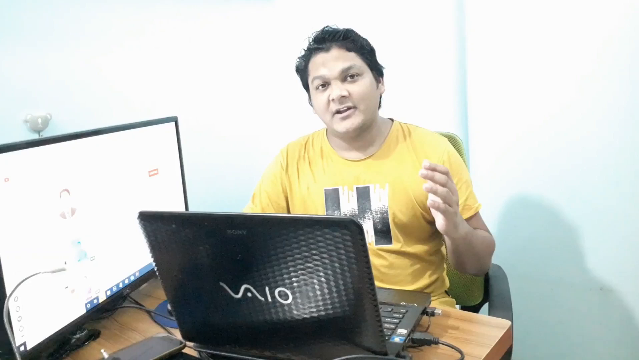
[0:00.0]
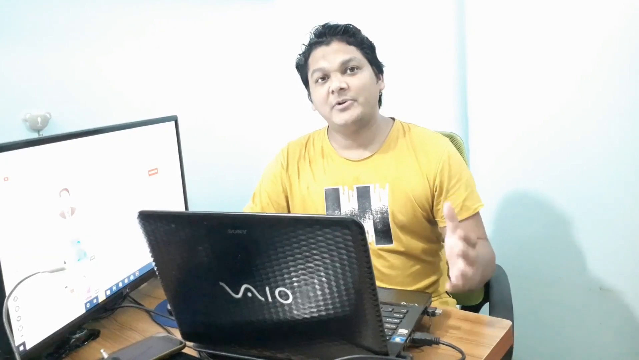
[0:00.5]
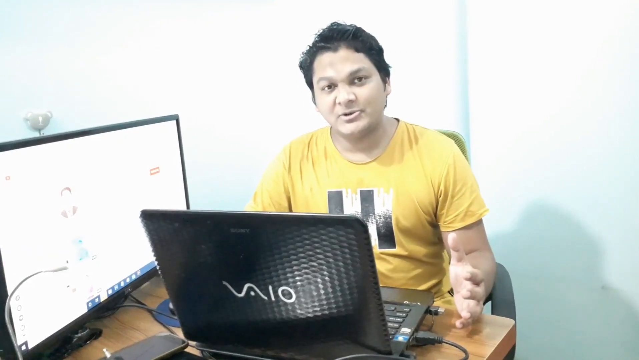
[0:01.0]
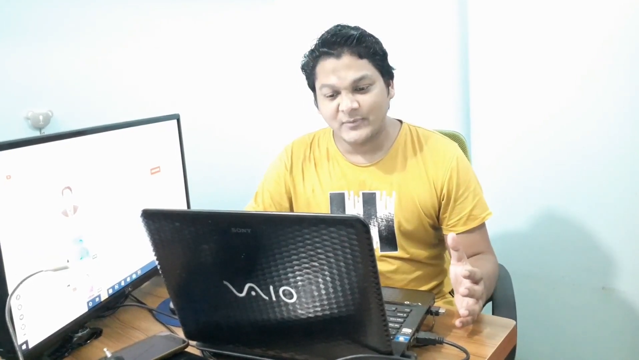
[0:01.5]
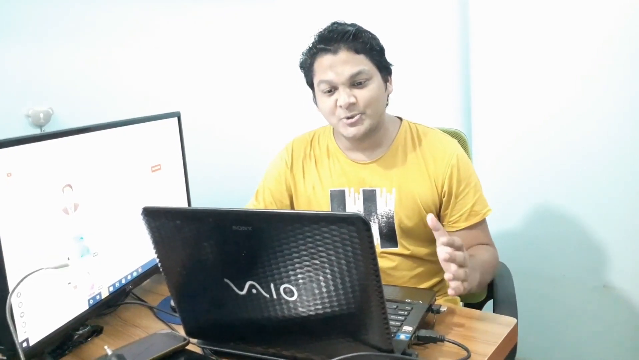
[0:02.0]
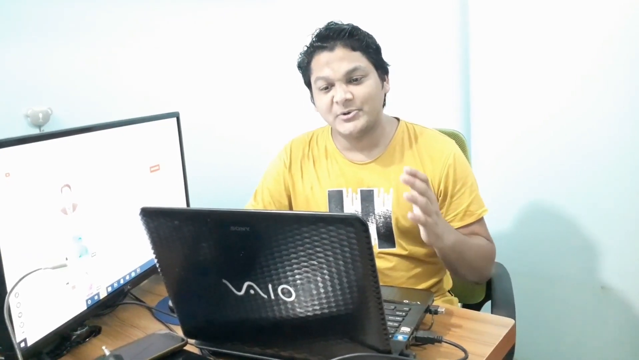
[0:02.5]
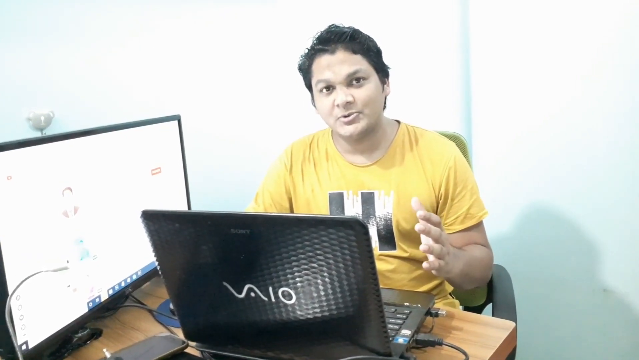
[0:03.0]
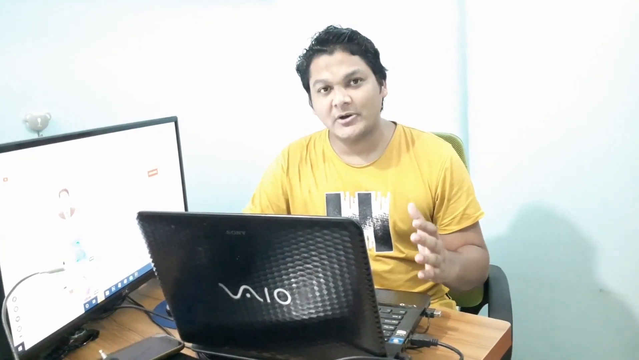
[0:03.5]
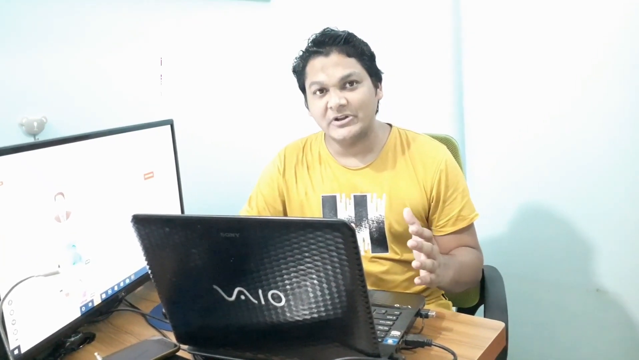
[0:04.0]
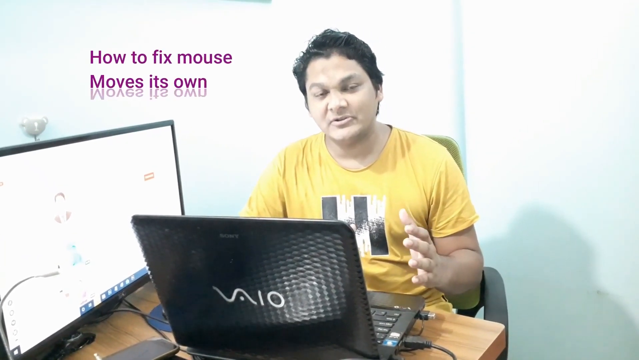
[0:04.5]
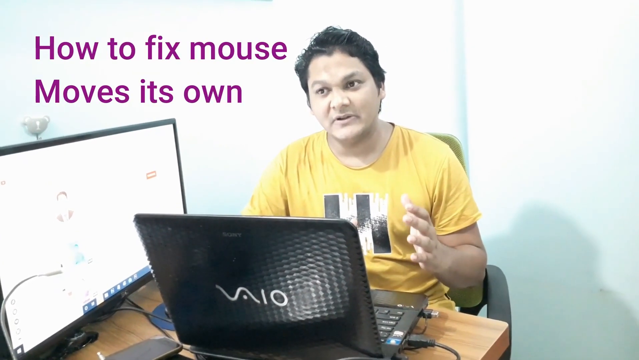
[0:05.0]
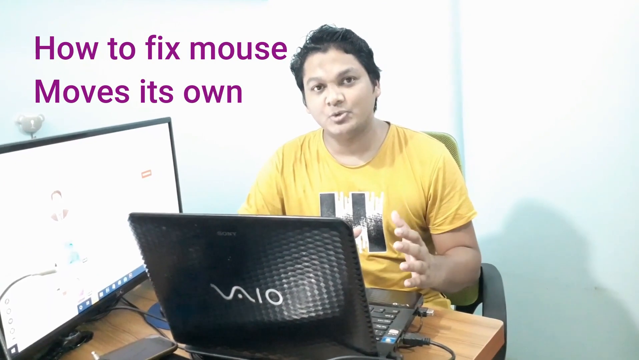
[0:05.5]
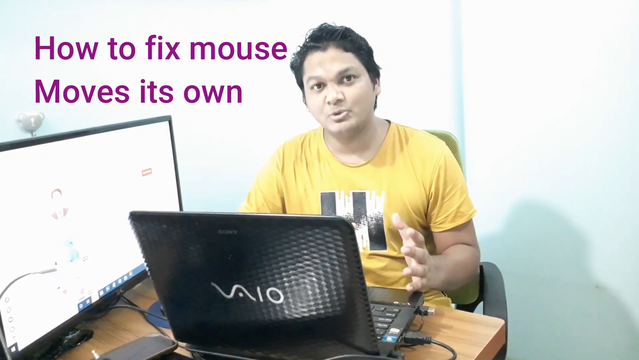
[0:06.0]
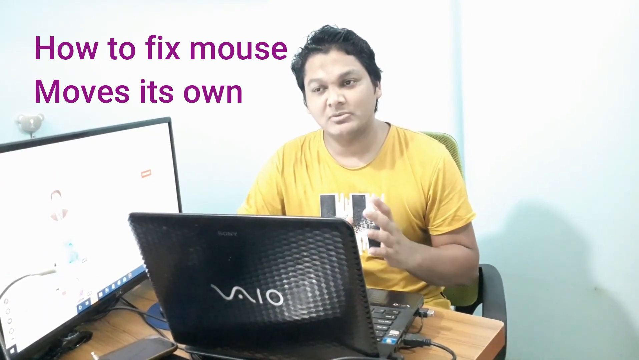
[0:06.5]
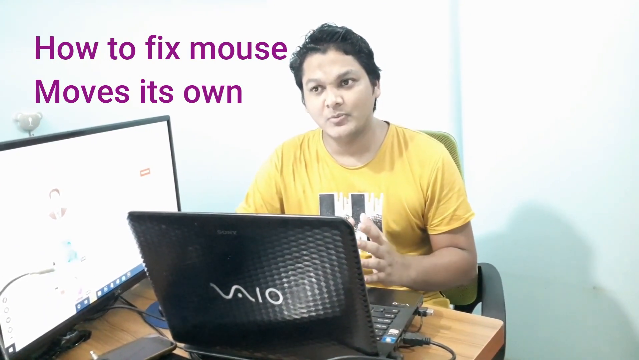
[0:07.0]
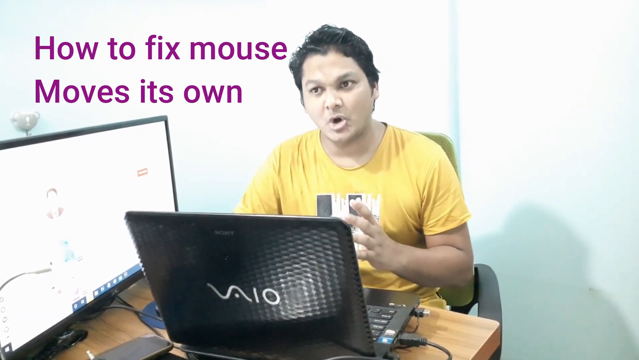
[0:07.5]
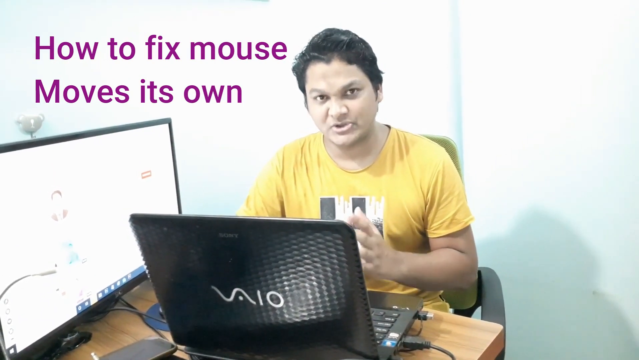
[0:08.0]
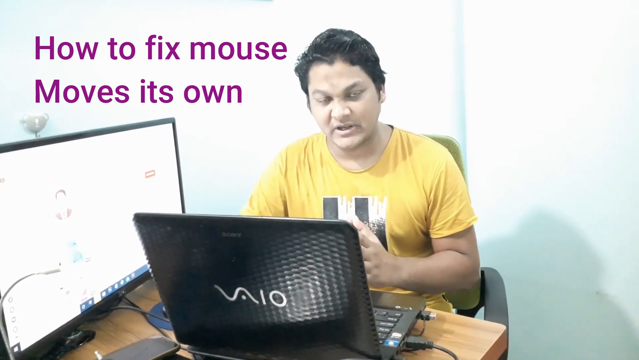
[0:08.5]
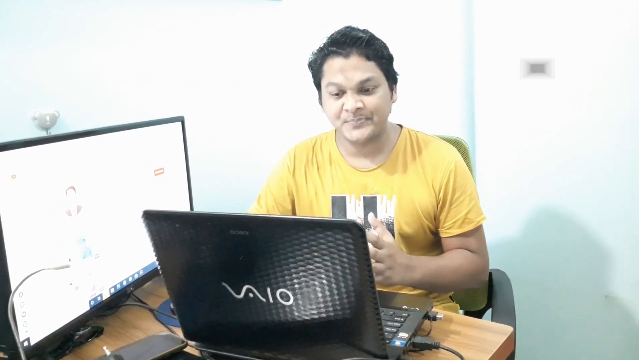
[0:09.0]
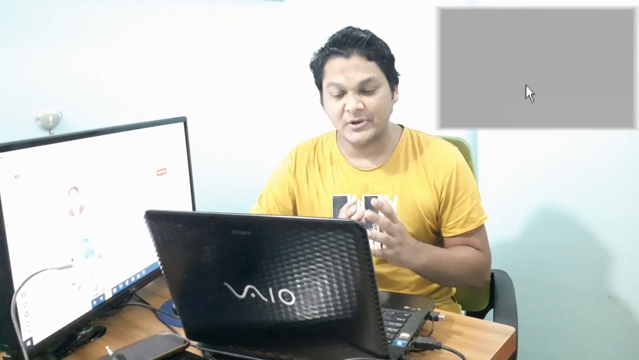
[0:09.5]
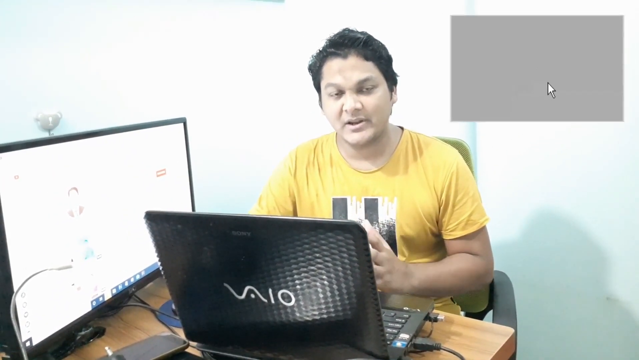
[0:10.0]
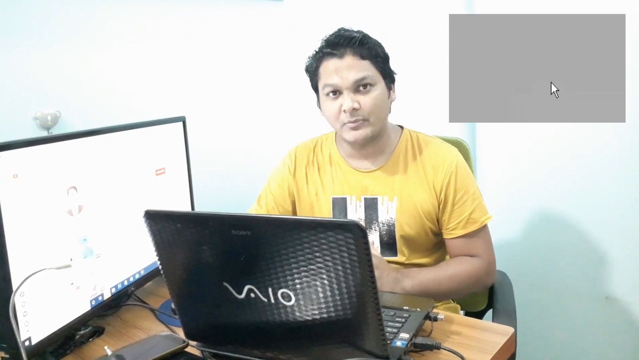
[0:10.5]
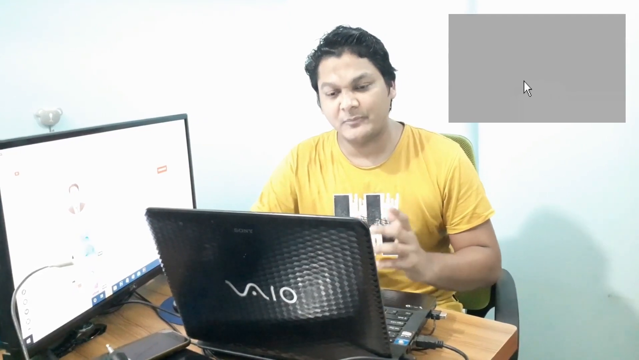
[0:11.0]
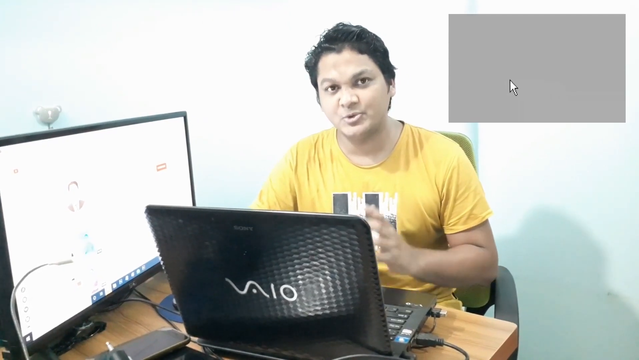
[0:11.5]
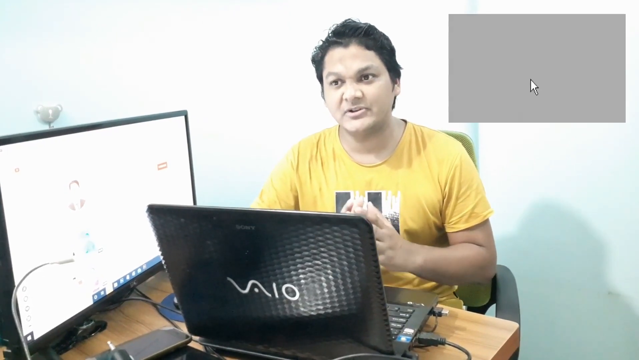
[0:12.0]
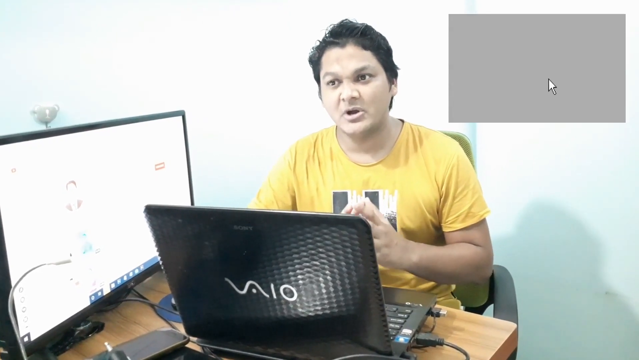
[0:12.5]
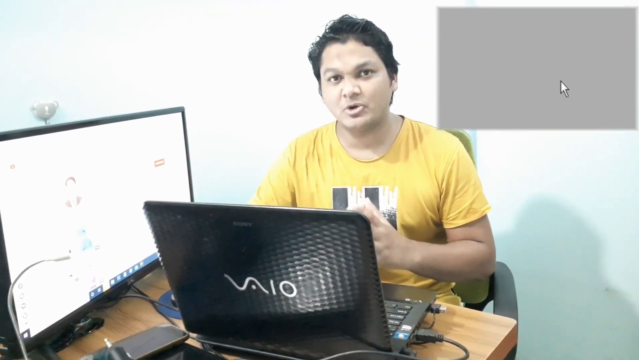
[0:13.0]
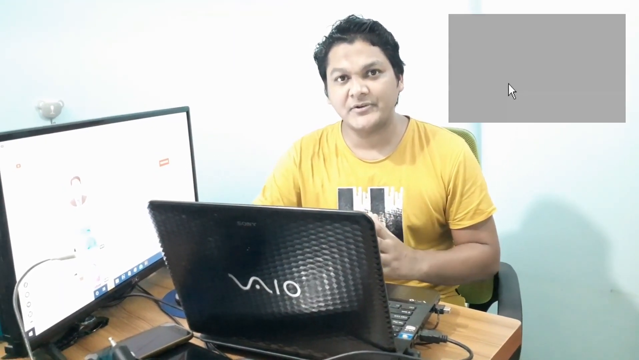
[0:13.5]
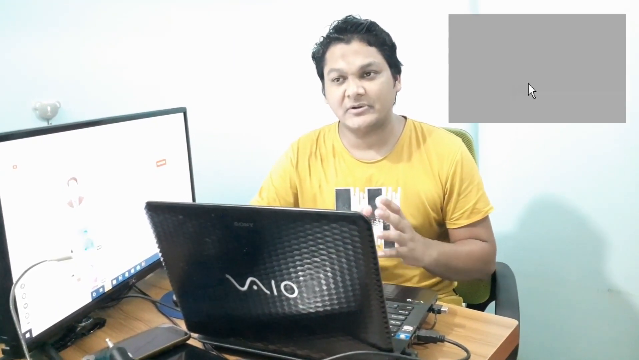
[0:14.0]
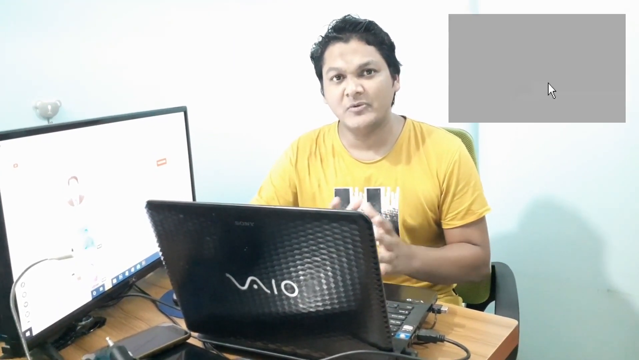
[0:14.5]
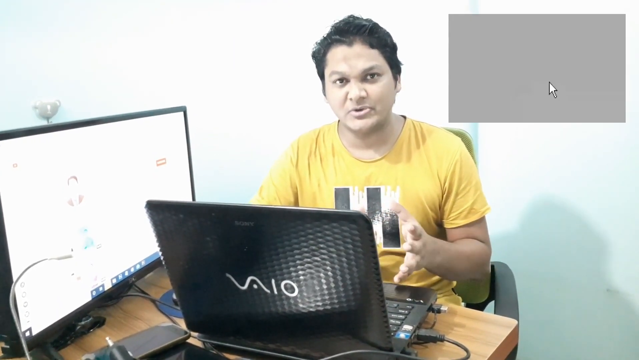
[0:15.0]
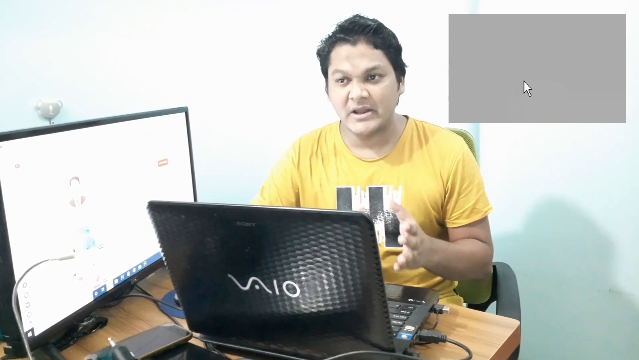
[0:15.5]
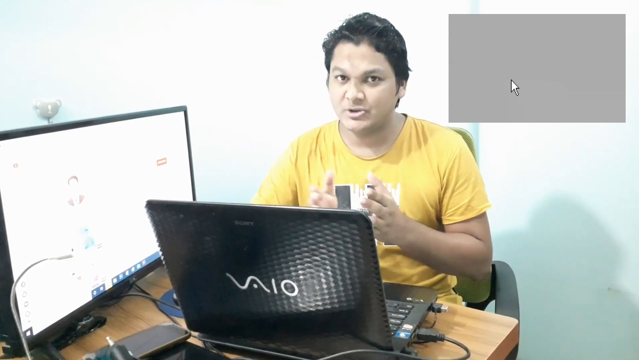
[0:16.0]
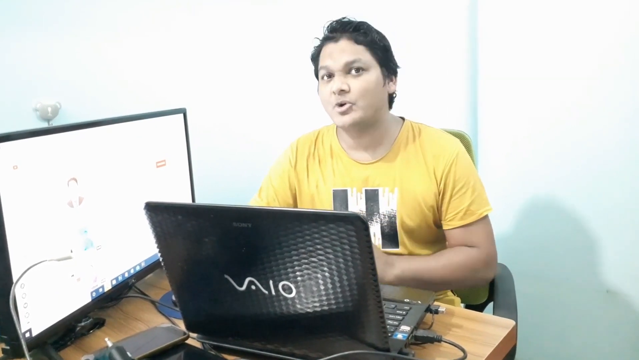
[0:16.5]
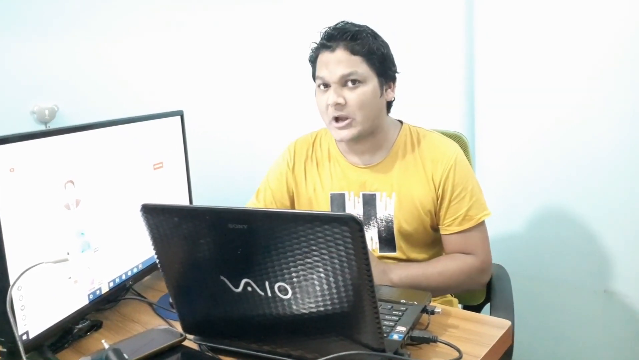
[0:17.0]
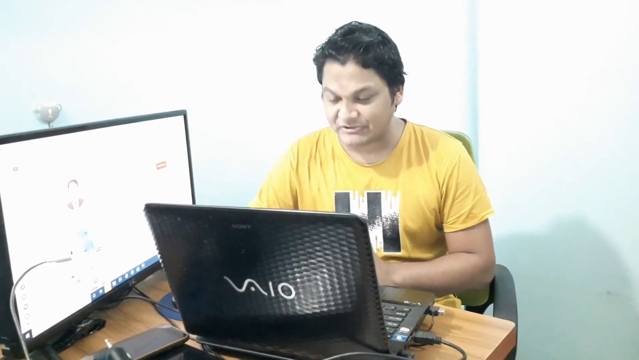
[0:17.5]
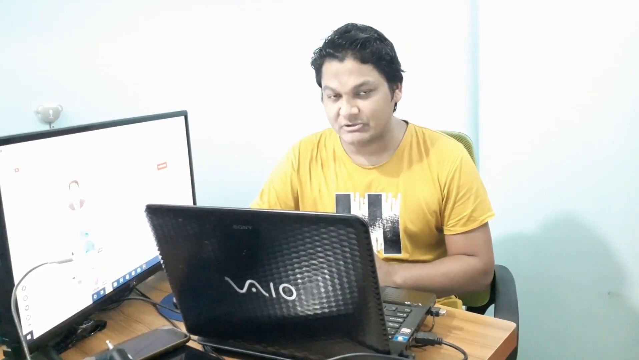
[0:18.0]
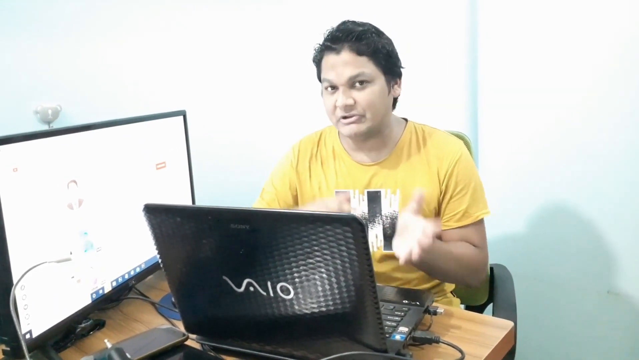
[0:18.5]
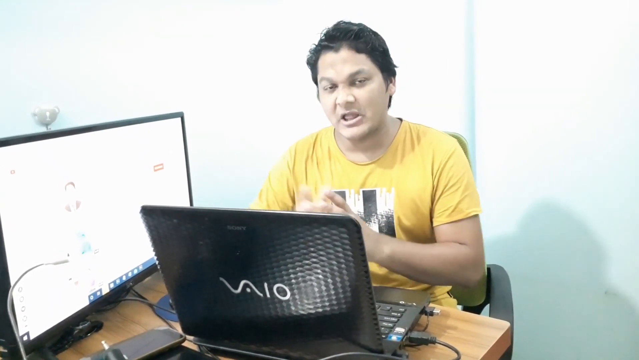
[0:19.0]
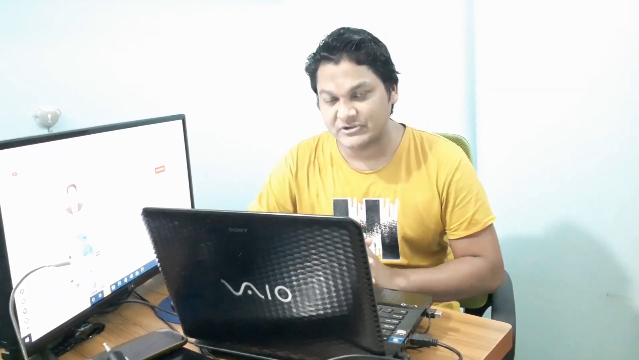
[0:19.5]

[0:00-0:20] A middle-aged man with light brown skin and dark hair, wearing a yellow shirt, is sitting in front of a VAIO laptop, with an additional monitor to his right. He speaks while looking at the camera, making up-and-down gestures with his left hand. Purple text appears on the screen reading "How to fix mouse moves on its own." A gray box pops up in the right corner of the screen as the man continues speaking and gesturing. The gray box does a shrinking animation, appears again, and then disappears completely. The man gestures with both hands from one side to the other, then keeps speaking while moving an open left hand up and down for emphasis. Purple text appears in the top left of the screen again, reading "How to fix mouse moves on its own."